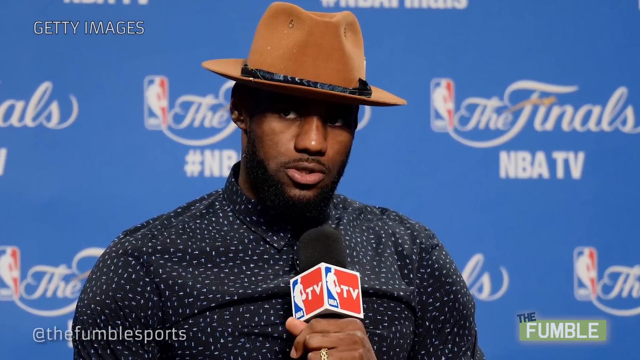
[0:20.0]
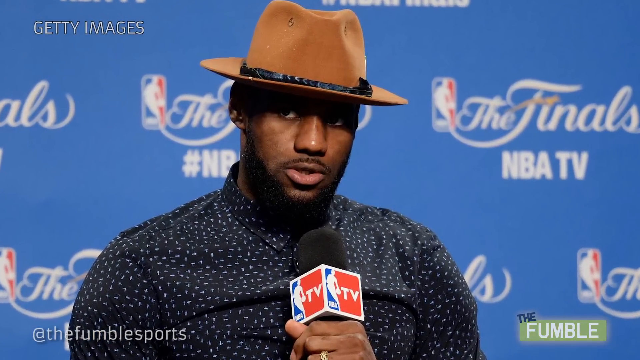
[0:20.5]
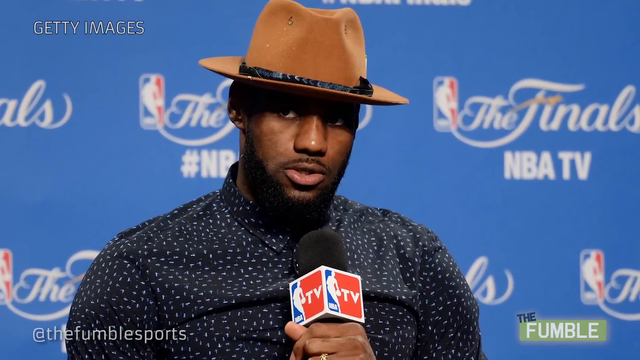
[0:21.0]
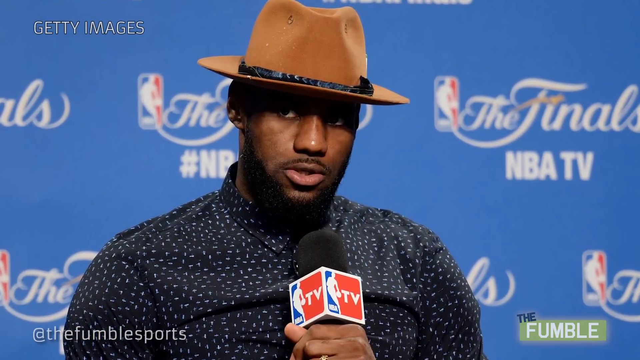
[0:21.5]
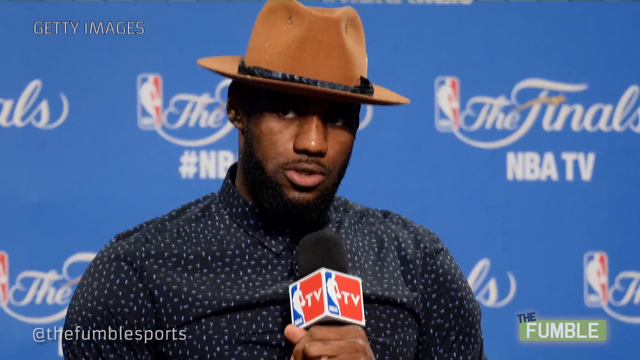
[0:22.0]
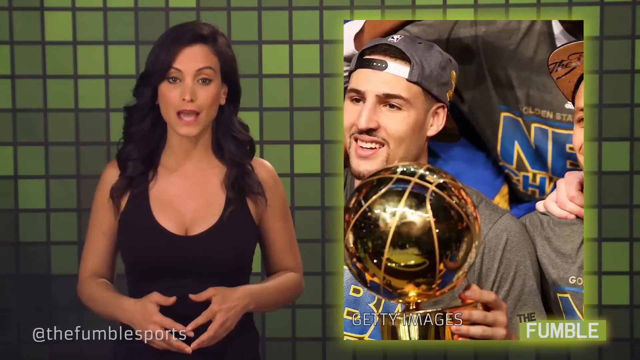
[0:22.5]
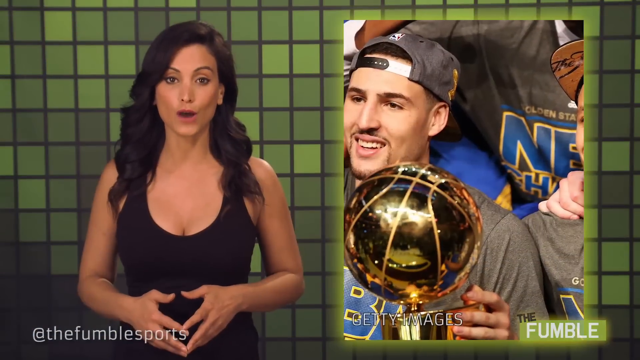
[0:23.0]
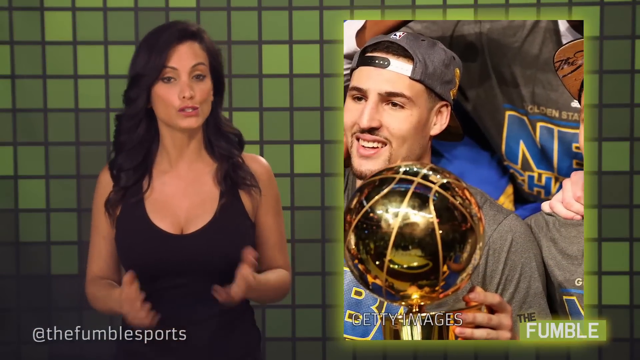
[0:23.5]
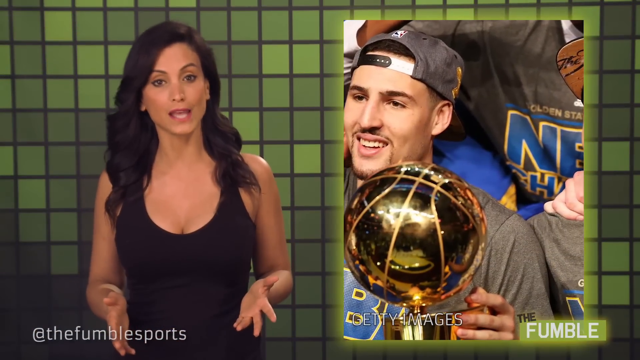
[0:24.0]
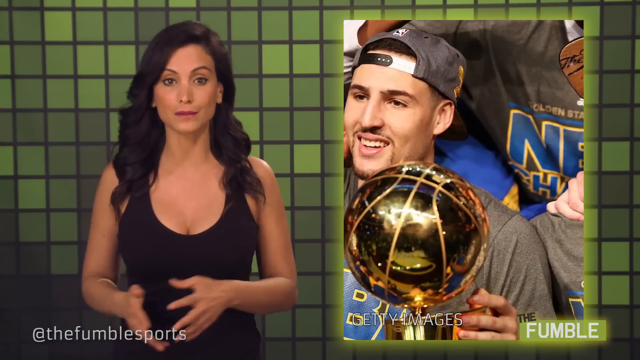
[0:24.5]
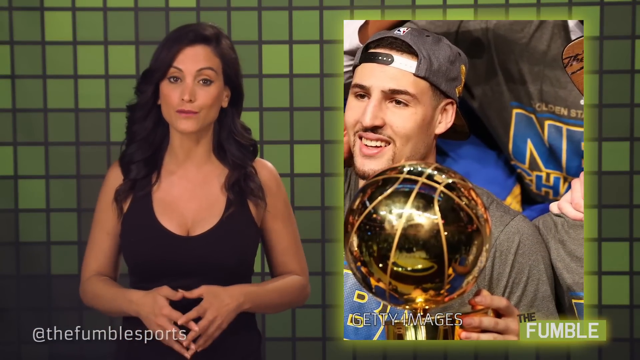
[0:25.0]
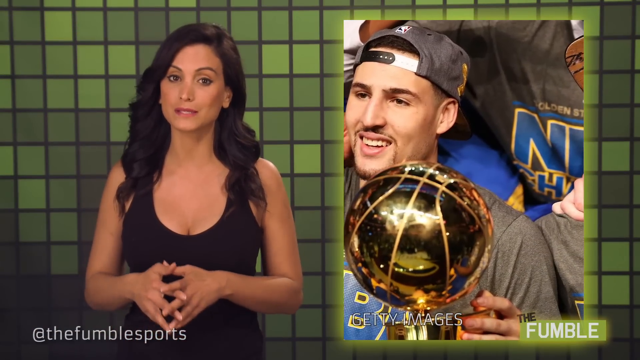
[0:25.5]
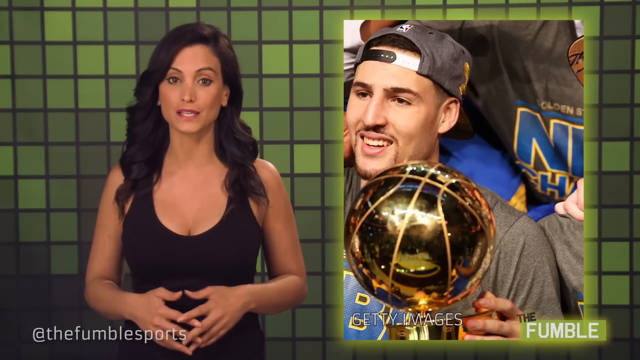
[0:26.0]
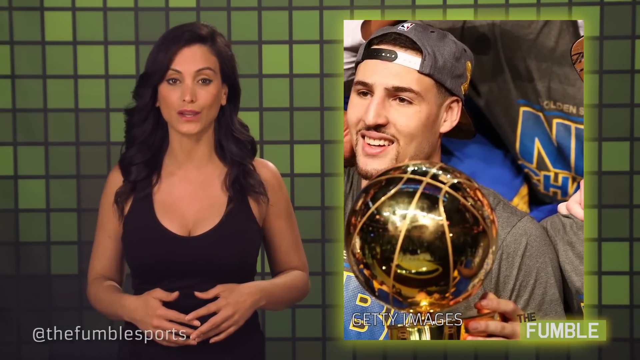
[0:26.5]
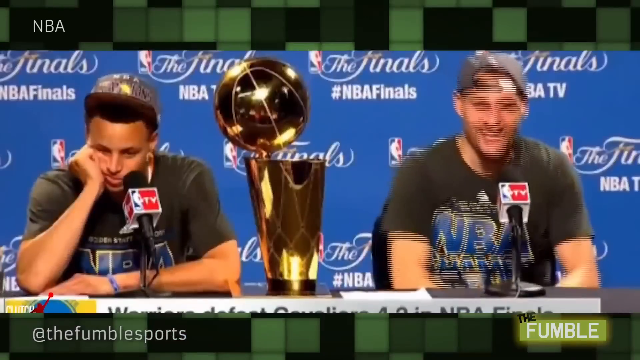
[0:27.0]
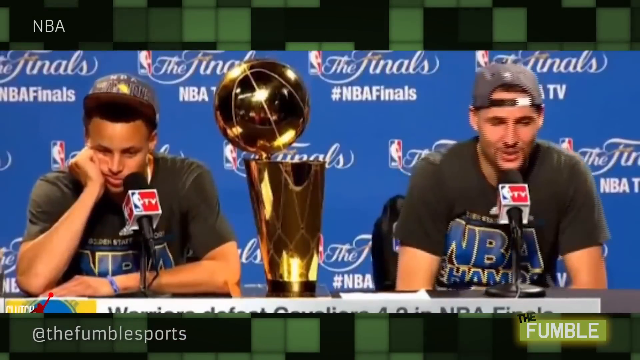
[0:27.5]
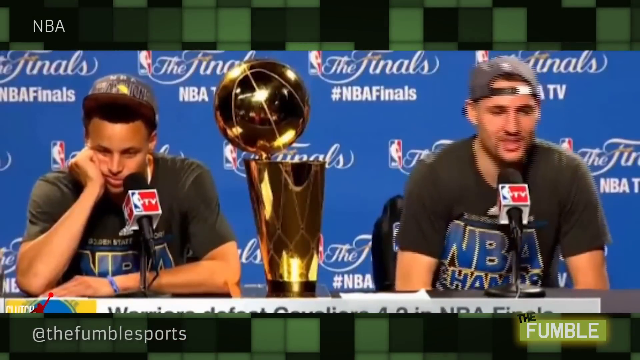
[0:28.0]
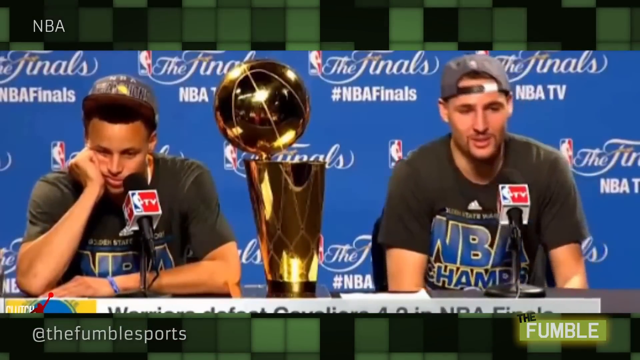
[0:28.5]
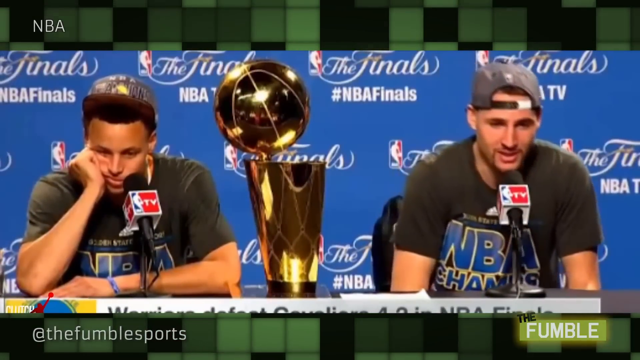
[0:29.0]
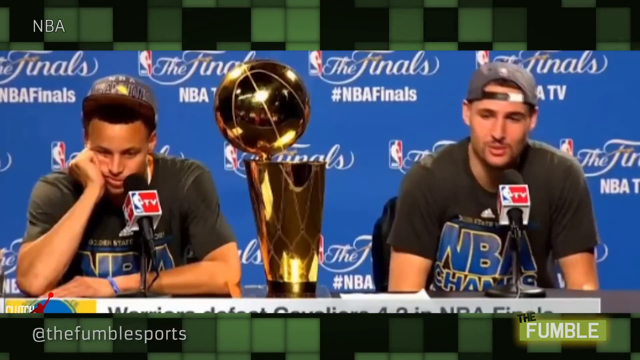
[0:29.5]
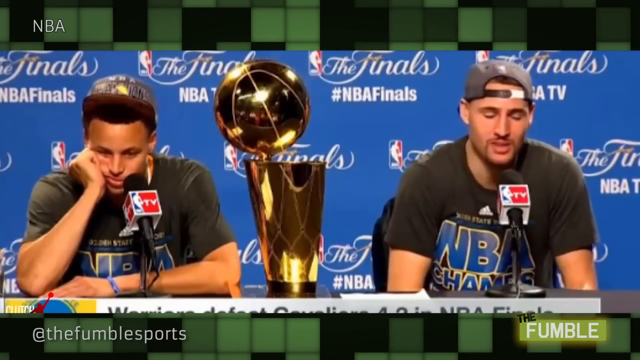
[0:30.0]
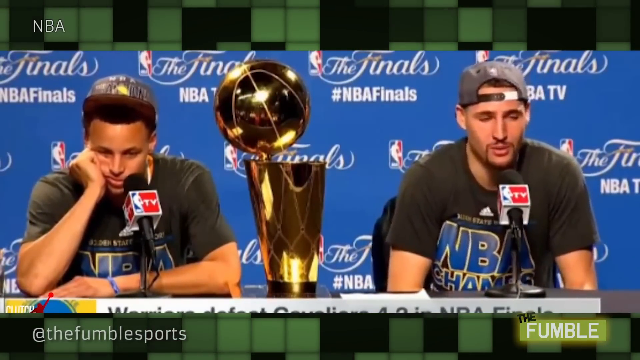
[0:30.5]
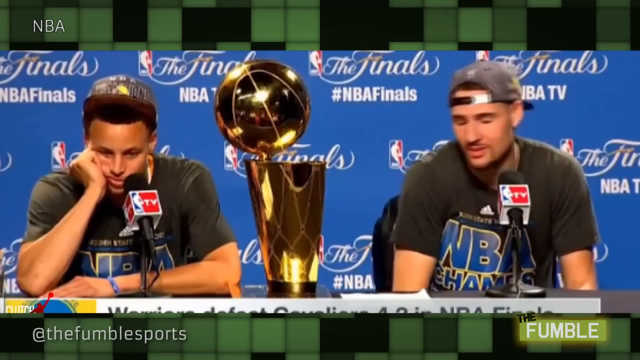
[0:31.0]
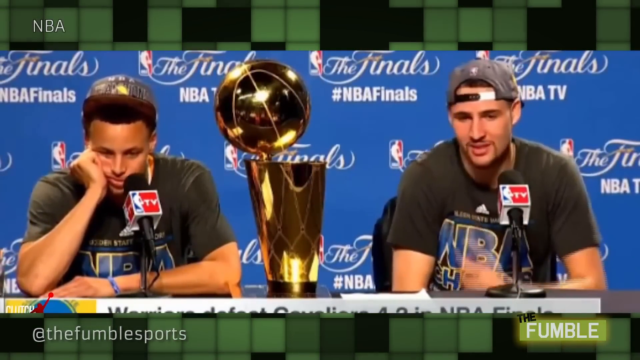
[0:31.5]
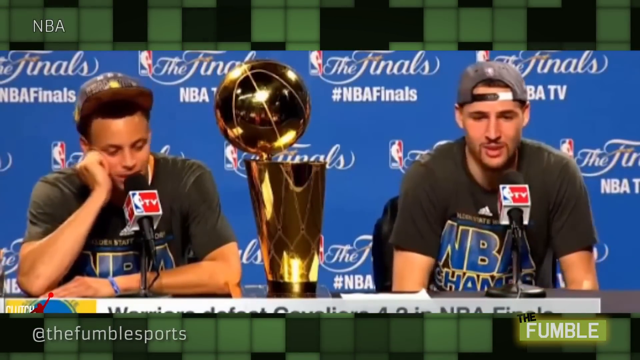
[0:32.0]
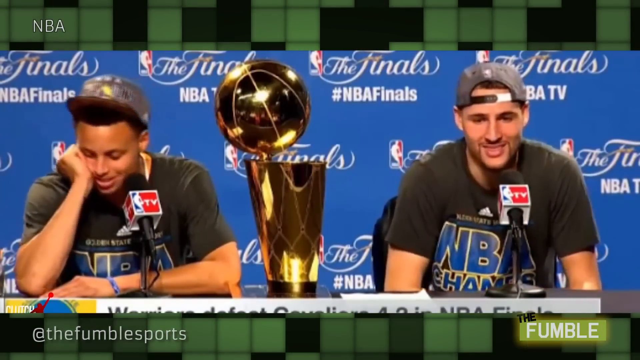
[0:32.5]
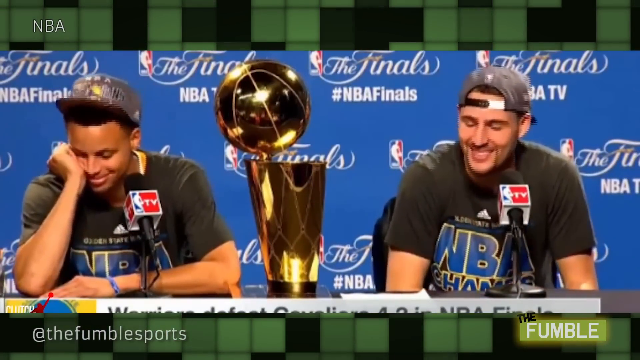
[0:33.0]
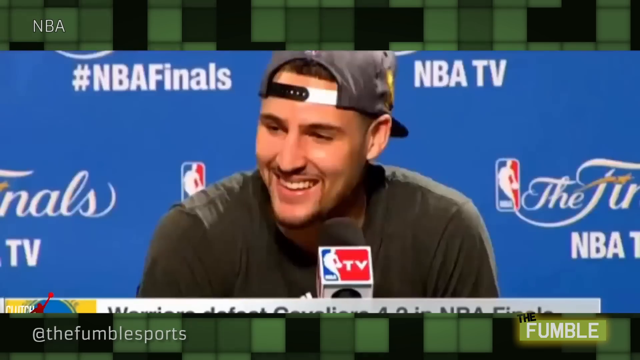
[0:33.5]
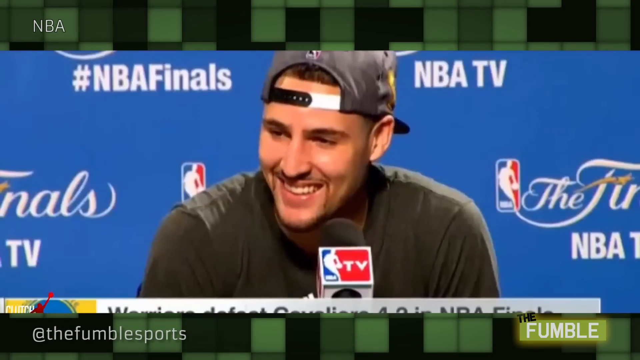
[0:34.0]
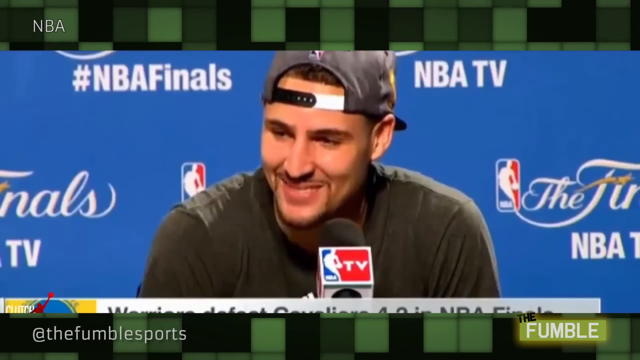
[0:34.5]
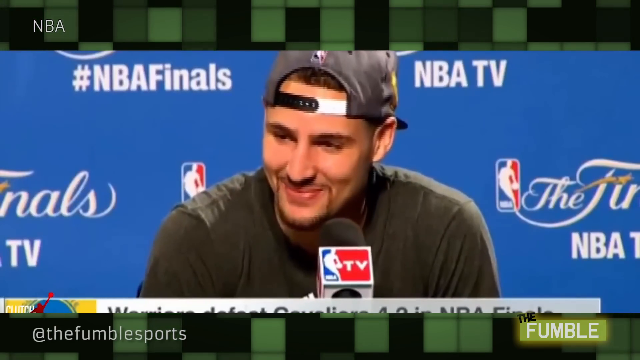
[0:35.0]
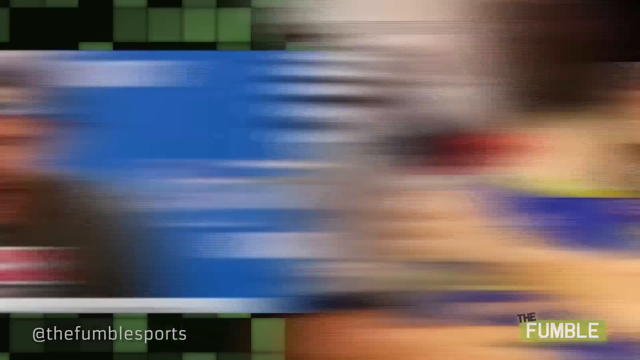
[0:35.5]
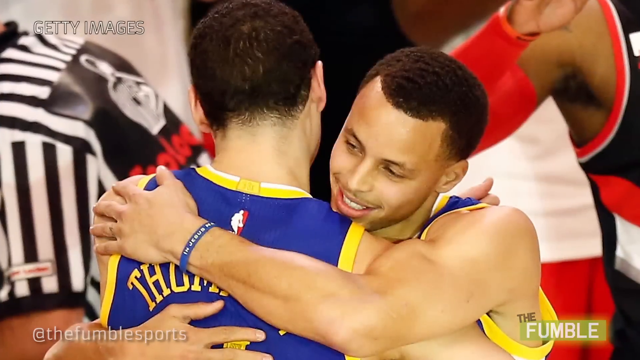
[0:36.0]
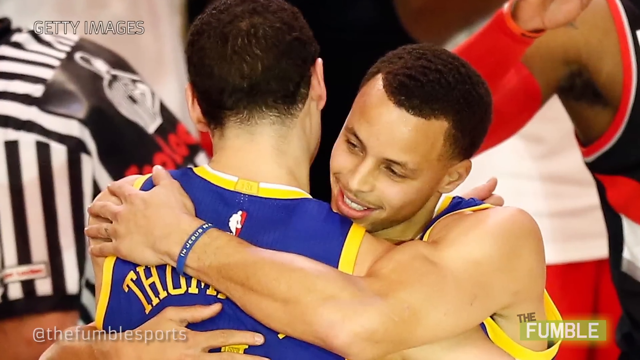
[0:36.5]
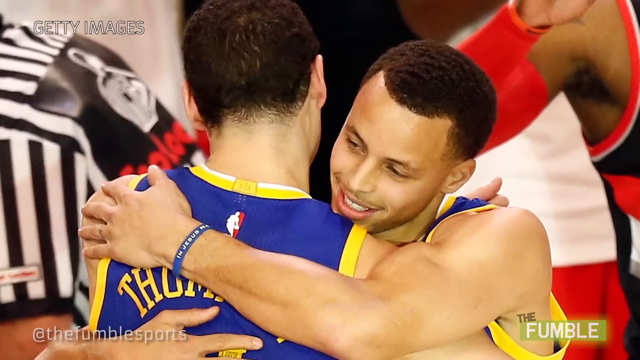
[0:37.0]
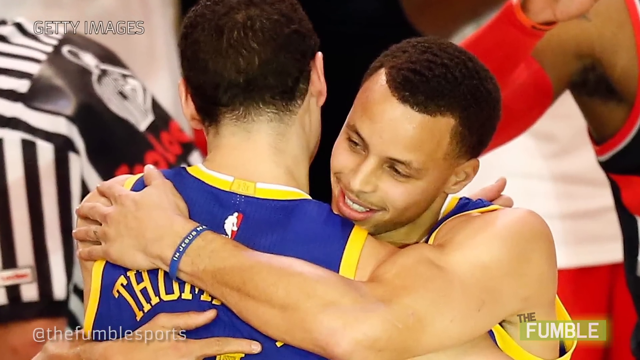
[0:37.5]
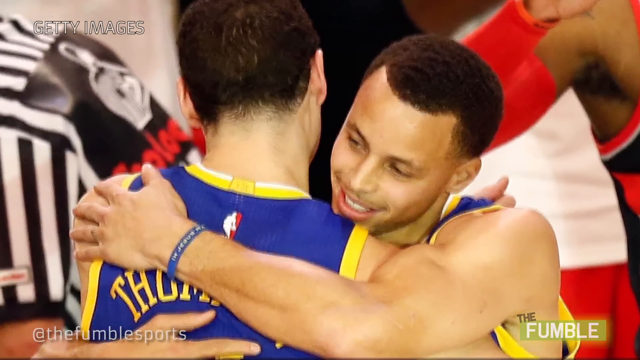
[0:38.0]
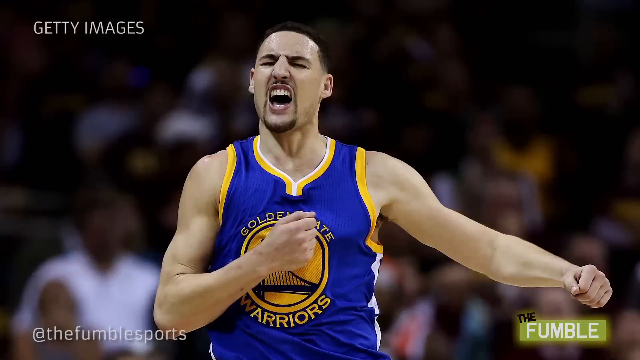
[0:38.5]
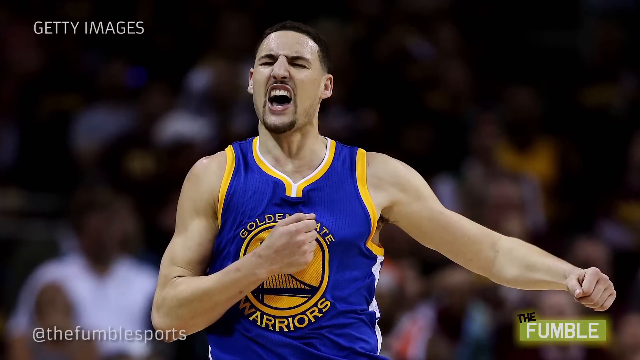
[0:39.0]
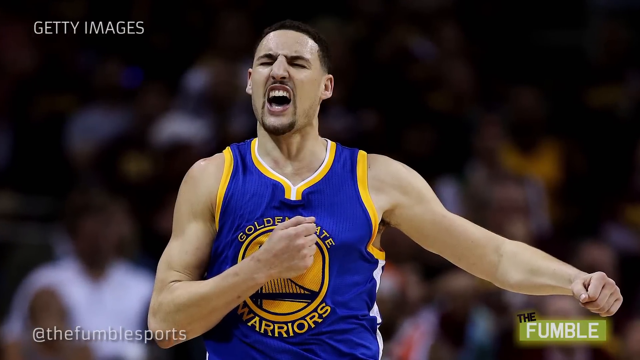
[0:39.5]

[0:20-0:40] The camera zooms in on an image of LeBron James holding a red, blue and black NBA microphone in his left hand. He wears a brown, kind of cowboy-style hat and a navy blue shirt with white specks, and behind him is a blue background with white text reading "the finals NBA TV". The video transitions back to the woman talking to the camera. Her hands are over her belly, thumbs almost touching and fingers pointing downward, the gap making almost a heart shape. On the right-hand side is a picture of a basketball player holding a trophy in his left hand, and the image slowly zooms in as the woman speaks. Next, two basketball players are interviewed, sitting in front of microphones with the blue "the finals NBA TV" logo behind them and the trophy in the middle. The player on the left has his left forearm across the table behind the microphone and his right elbow on the table, with his clenched fist against his right cheek. The player on the right has his hands down by his sides and shuffles left and right as he talks to the camera. He points with his left hand toward the trophy or his teammate on his right. He laughs and smiles, and the camera zooms in and focuses on him as he laughs and nods his head. A photo follows of the two players from the interview hugging each other, wearing blue and yellow basketball outfits. Then one of them appears alone in the blue and yellow outfit, right hand clenched over his chest and left arm extended out to the side, appearing to shout or celebrate.